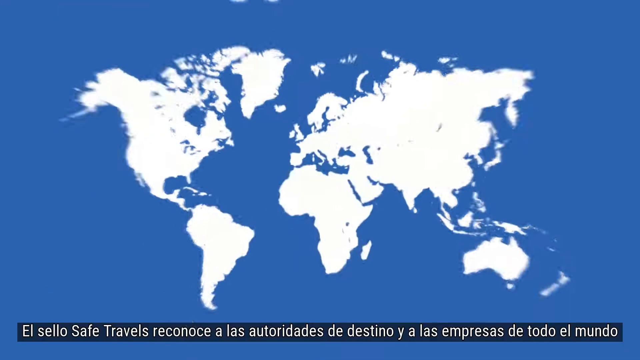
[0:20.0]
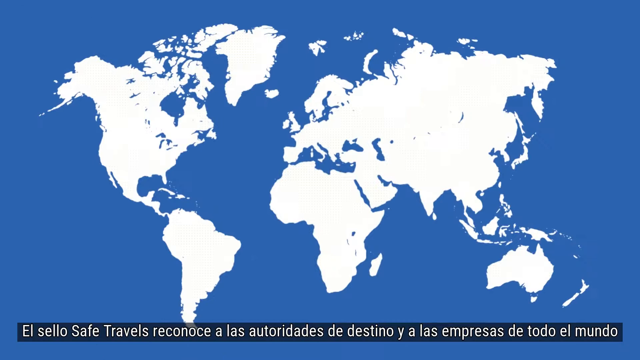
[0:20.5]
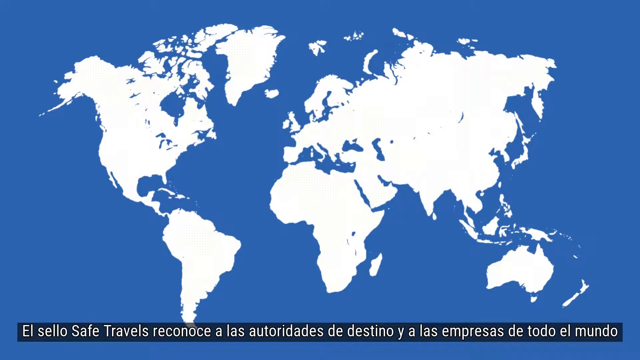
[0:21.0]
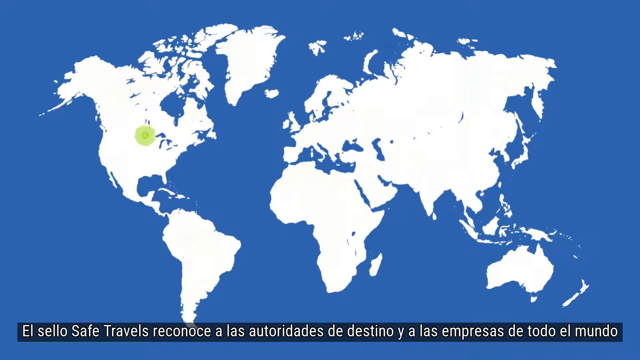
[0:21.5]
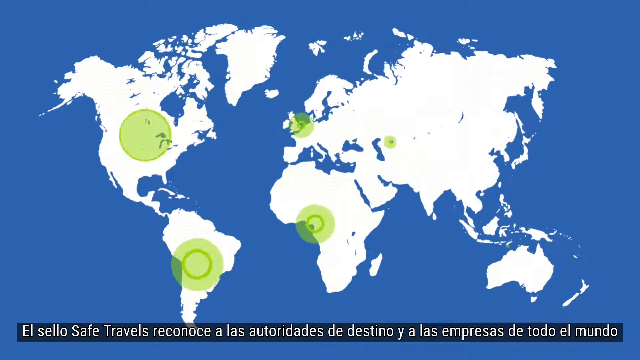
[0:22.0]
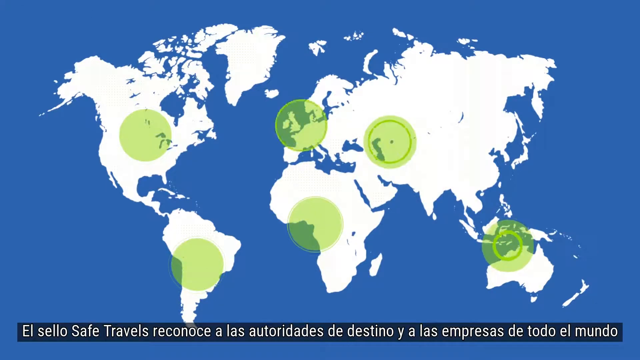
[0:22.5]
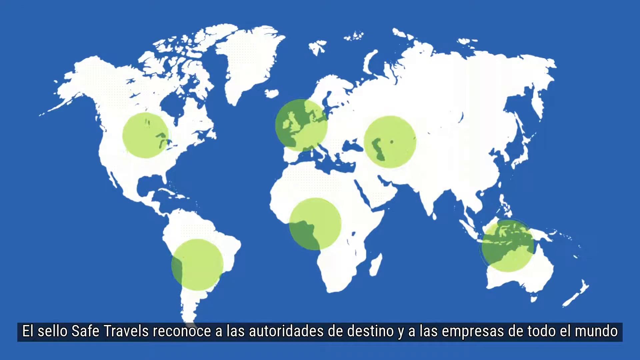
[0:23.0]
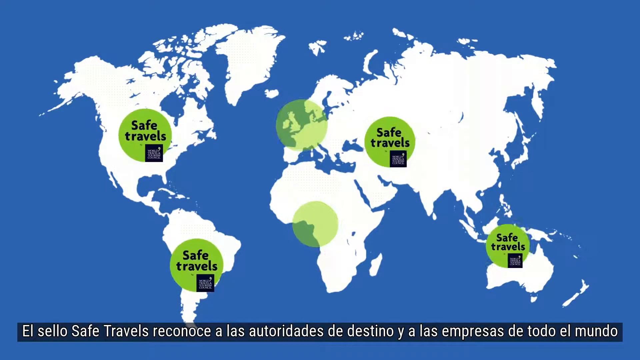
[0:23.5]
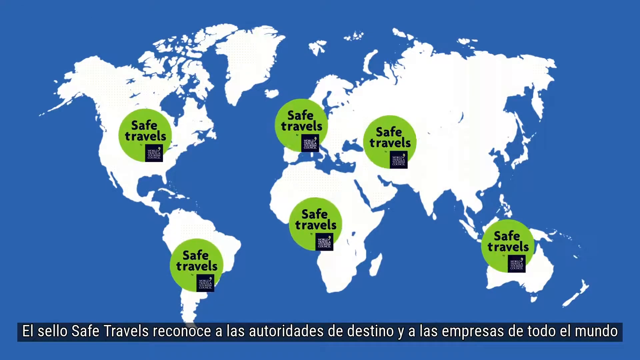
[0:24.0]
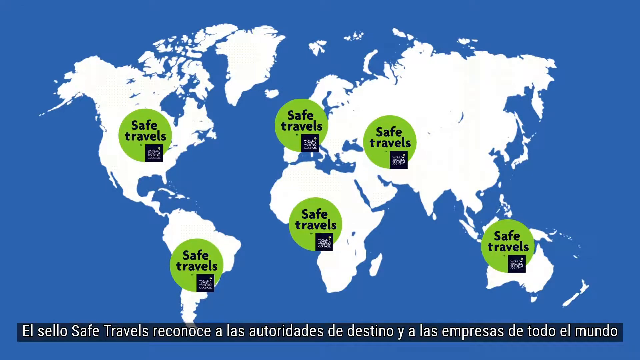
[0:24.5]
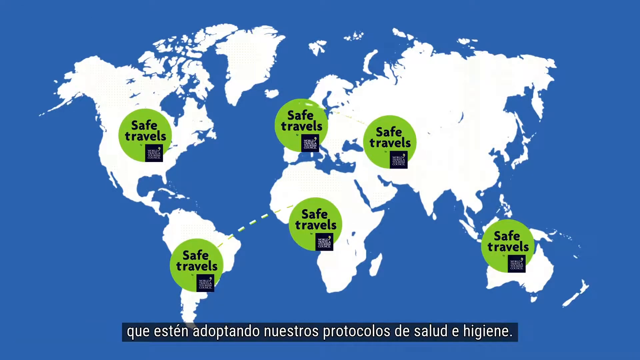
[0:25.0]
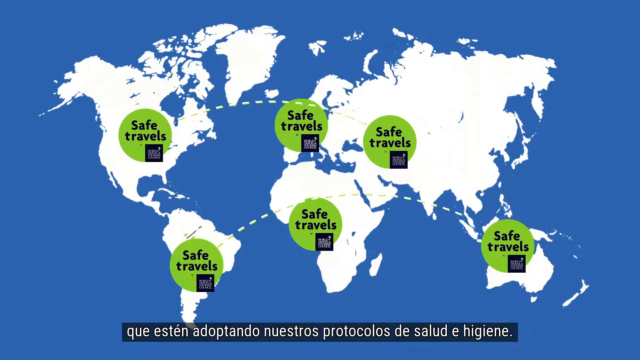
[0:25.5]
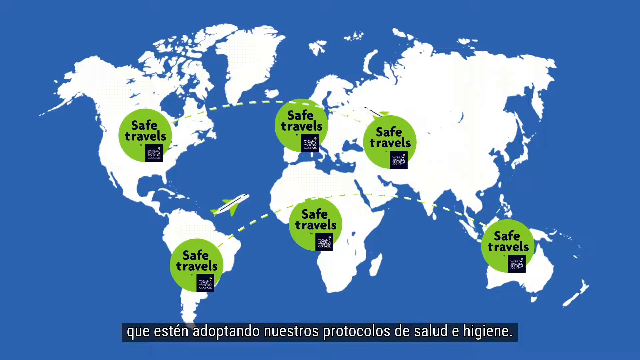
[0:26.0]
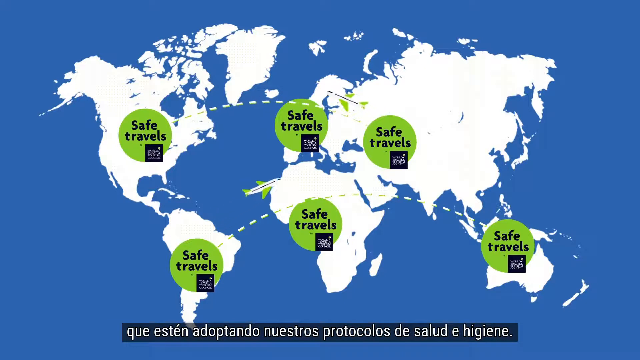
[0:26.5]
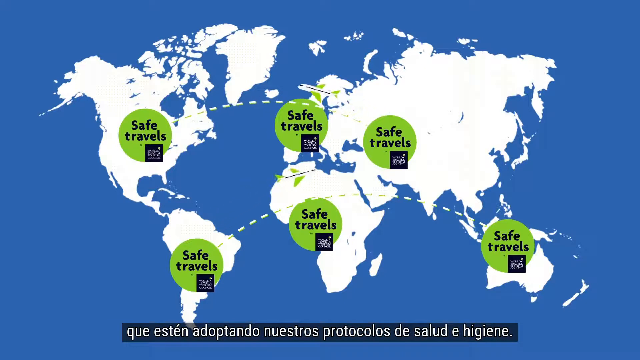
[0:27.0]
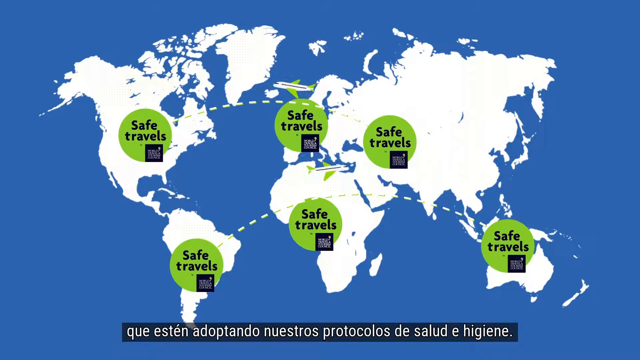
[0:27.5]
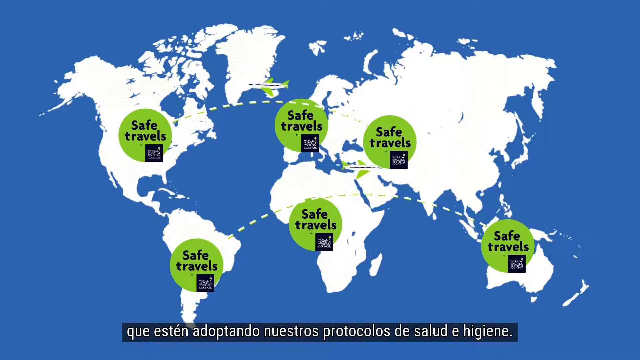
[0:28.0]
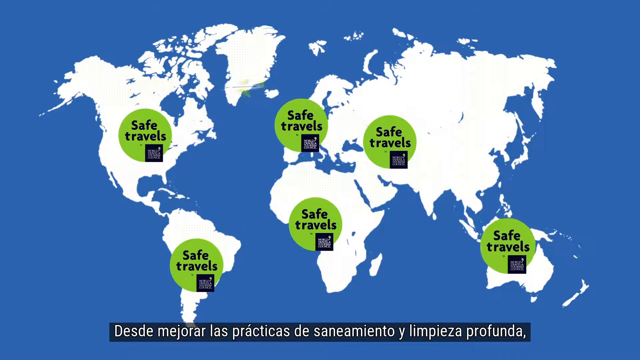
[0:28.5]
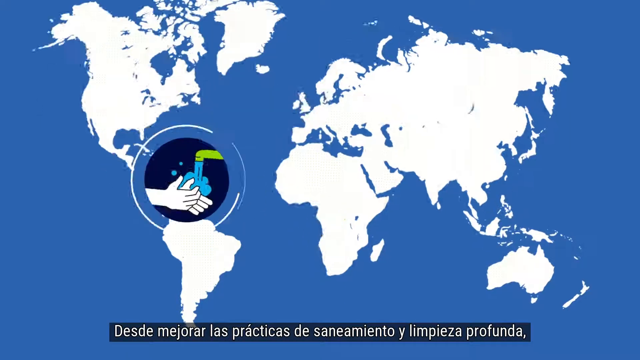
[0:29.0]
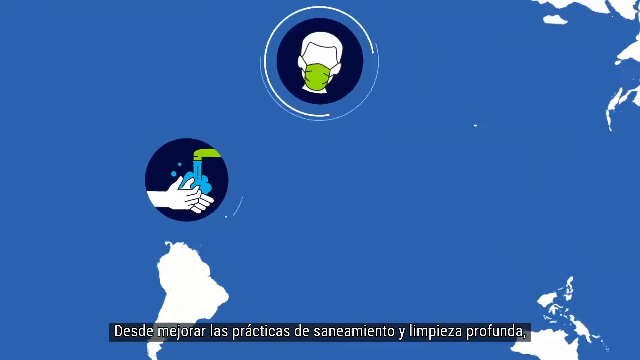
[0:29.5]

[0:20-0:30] A world is shown with the places where the SafeTravels company offers its service, covering practically all of the world, including Australia, Africa, Argentina, the United States of America, France, Bulgaria and possibly Russia. Airplanes with lines travel from one ball of safe travels to another. After that, more icons appear, including cleaning hands.